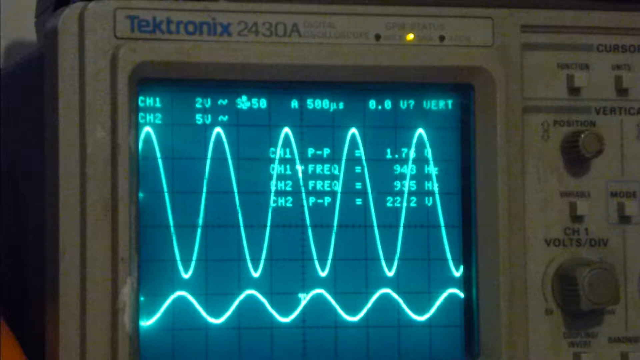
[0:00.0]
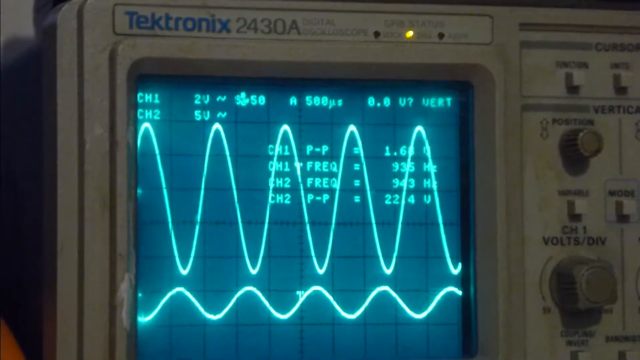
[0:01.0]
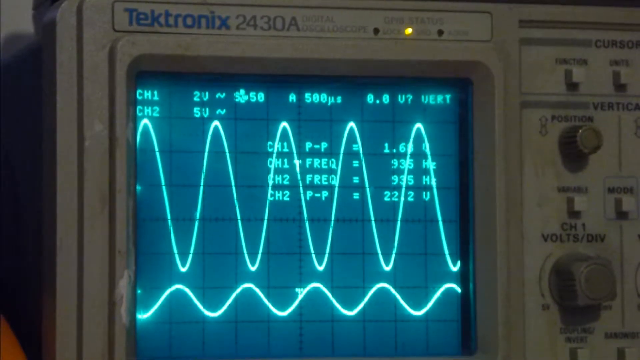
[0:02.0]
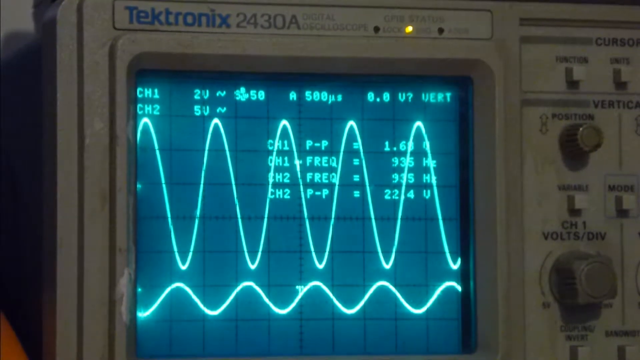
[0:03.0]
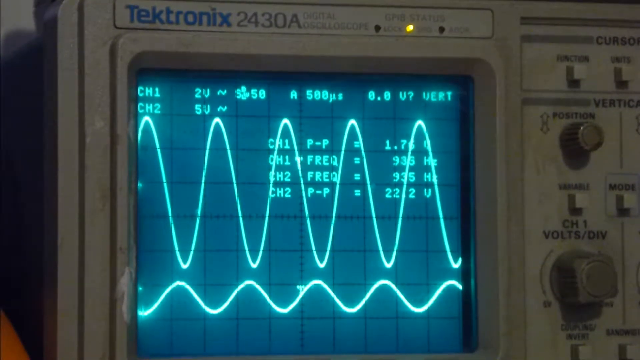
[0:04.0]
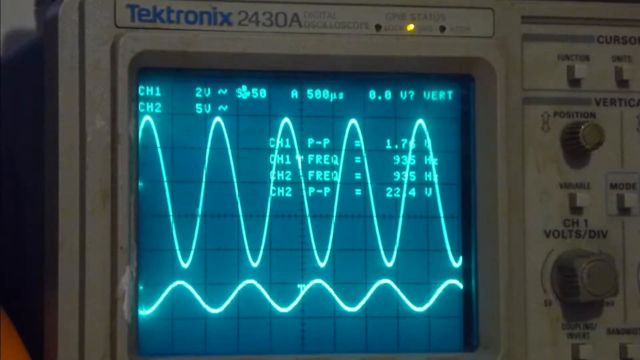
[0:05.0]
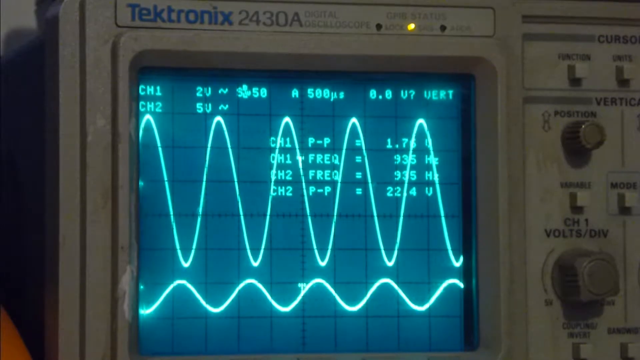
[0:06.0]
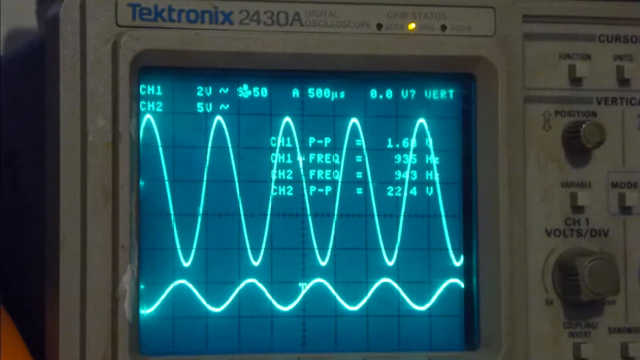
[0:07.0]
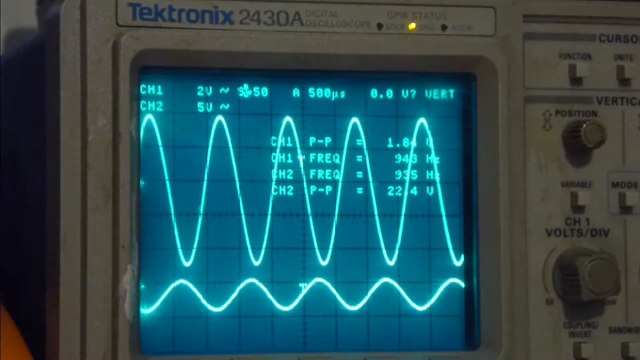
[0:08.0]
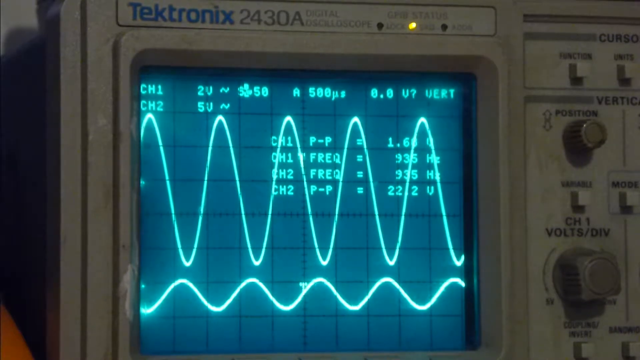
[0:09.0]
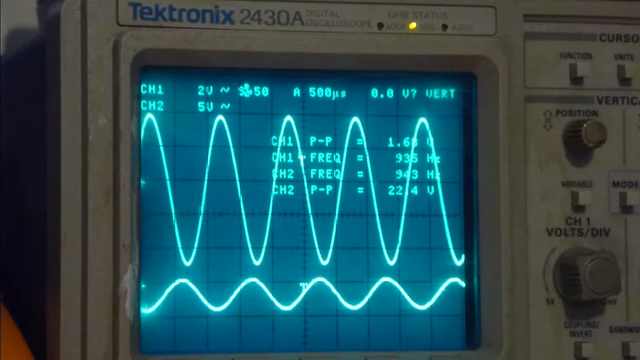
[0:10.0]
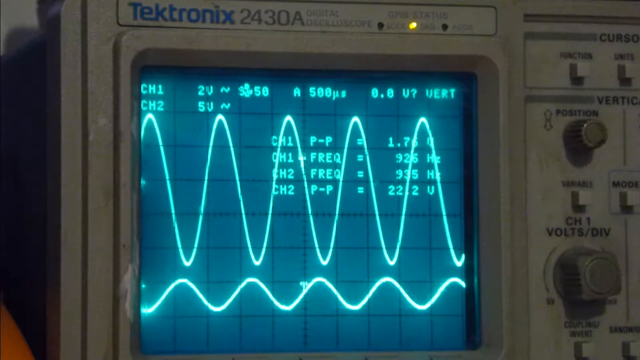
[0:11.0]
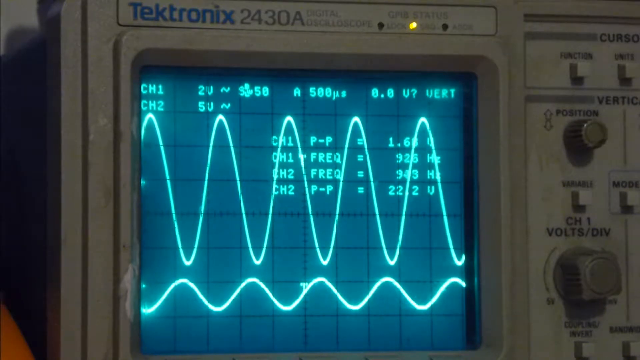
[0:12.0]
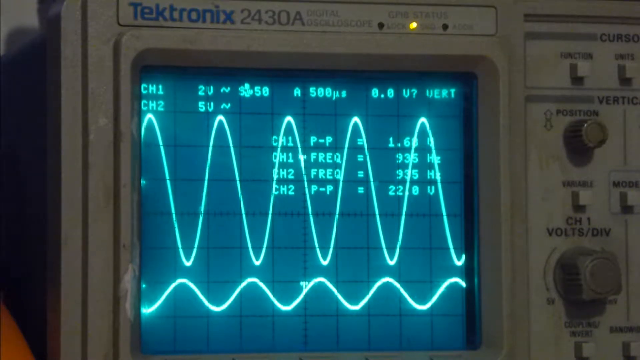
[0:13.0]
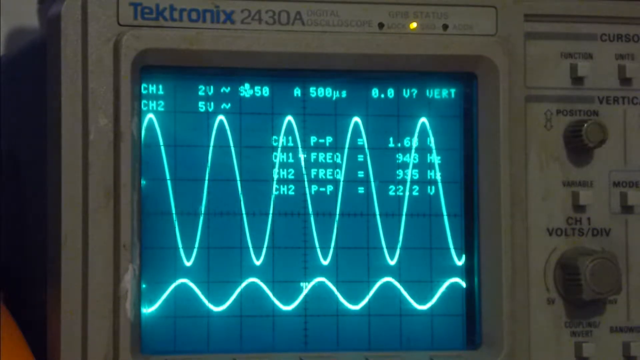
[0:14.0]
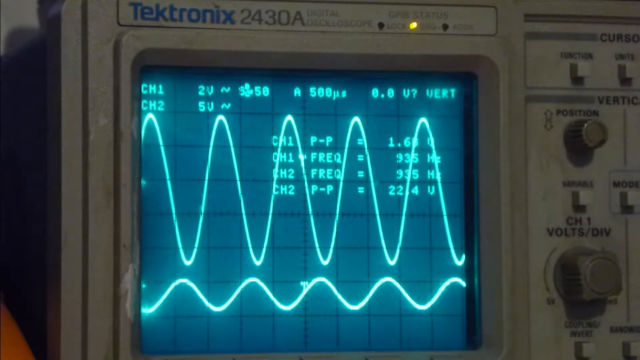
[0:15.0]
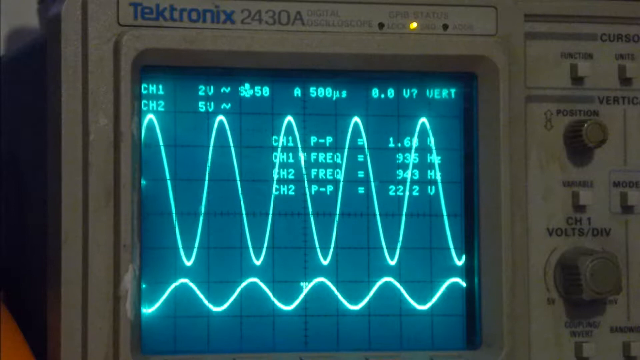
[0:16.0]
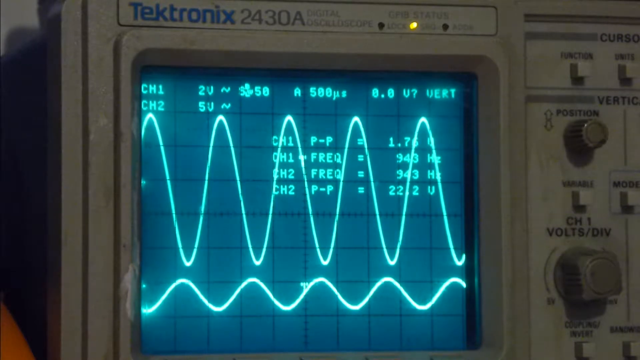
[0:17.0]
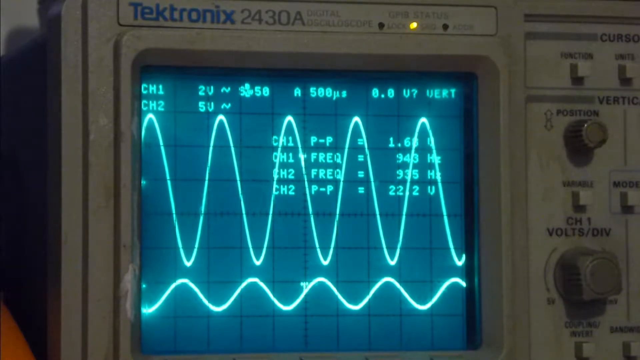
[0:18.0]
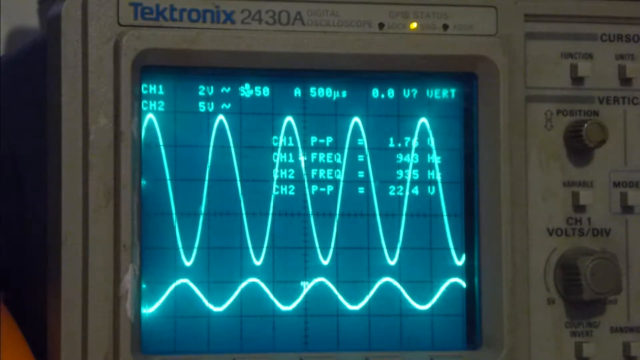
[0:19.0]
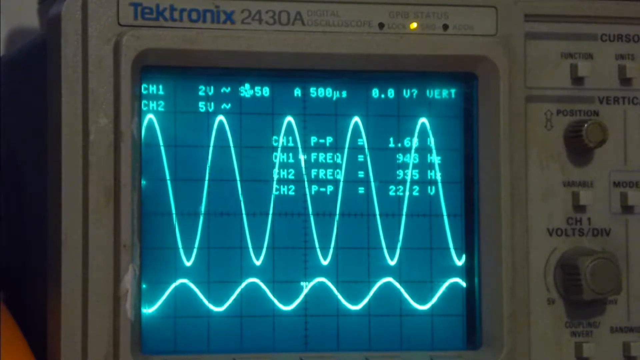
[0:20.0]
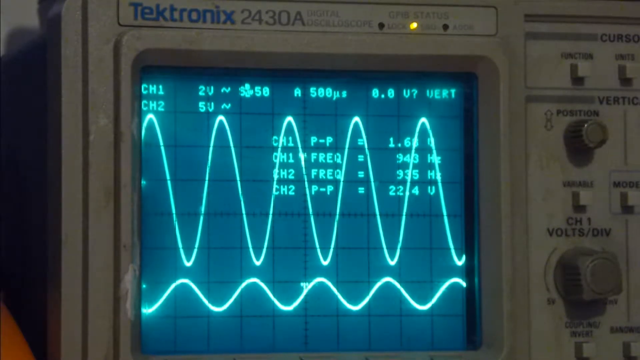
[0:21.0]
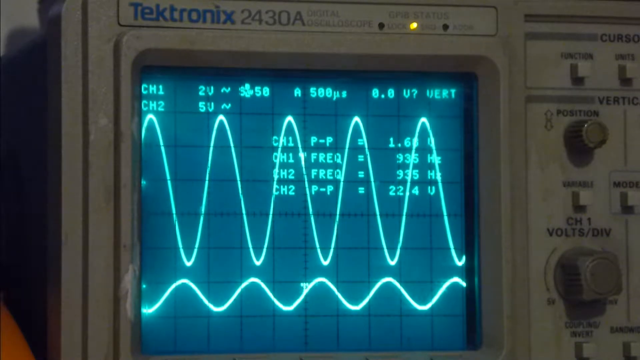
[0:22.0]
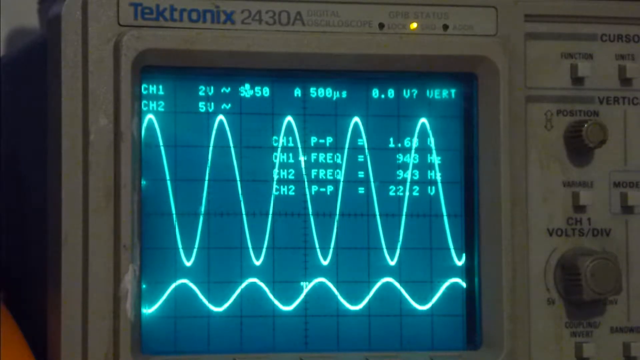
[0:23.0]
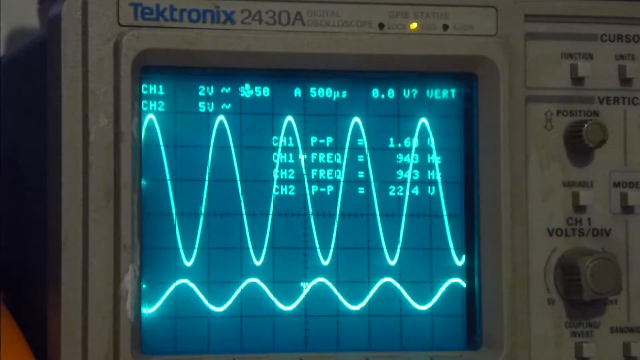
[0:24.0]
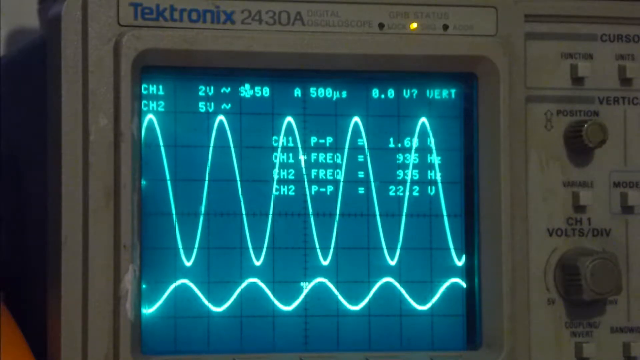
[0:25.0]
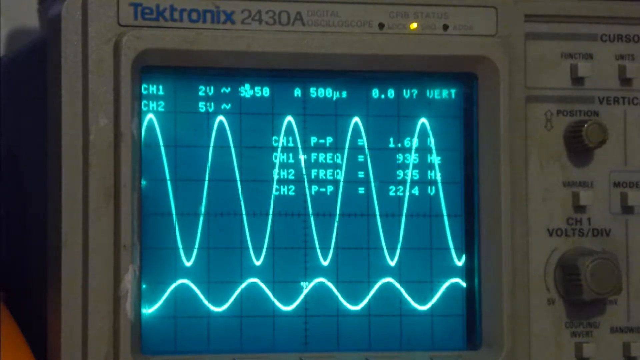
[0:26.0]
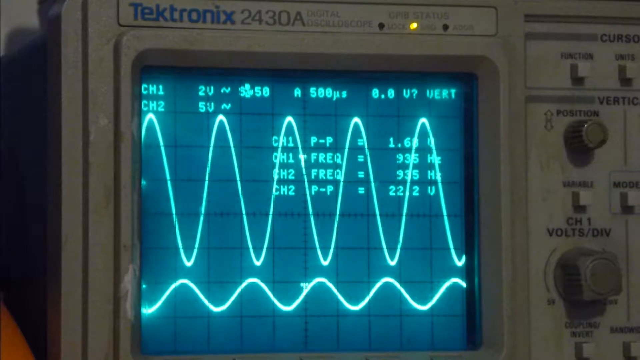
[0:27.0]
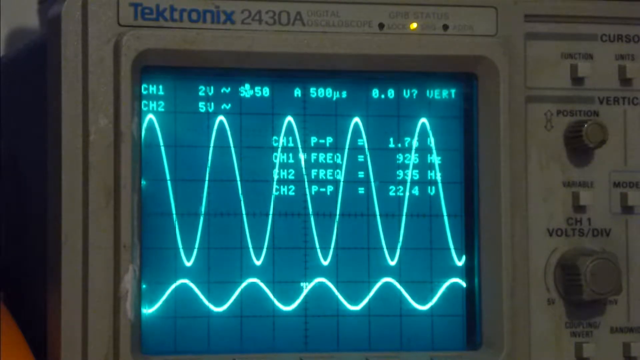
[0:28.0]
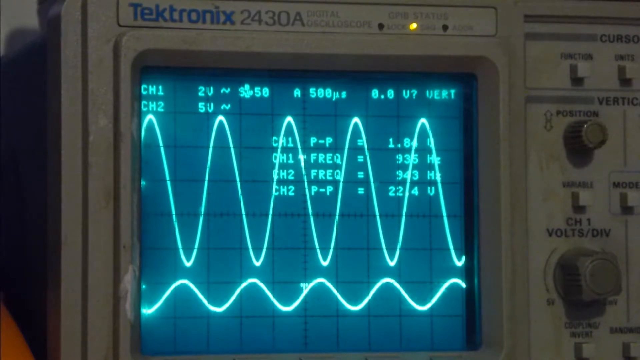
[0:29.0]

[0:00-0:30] A Tektronix 24308 digital oscilloscope is displayed. Its screen shows two waves that look like sine waves, apparently belonging to two different channels, since the screen has labels for channel 1 and channel 2, "CH1" and "CH2". At the top is a blue-green sine wave with high amplitude, and at the bottom is a regular-looking sine wave. In the middle of the screen are additional readouts for the channels: "CH1 PP" equal to 1.76, then CH1 frequency at 940 Hz, then CH2 frequency at 935 Hz, and finally a P-P value of 22.2 V. To the right of the screen are controls, including smaller knobs for positioning and another knob at the bottom right for voltage, channel 1 volts. There are also four buttons, and the one readable label, on the button at the bottom right of them, is "mode".